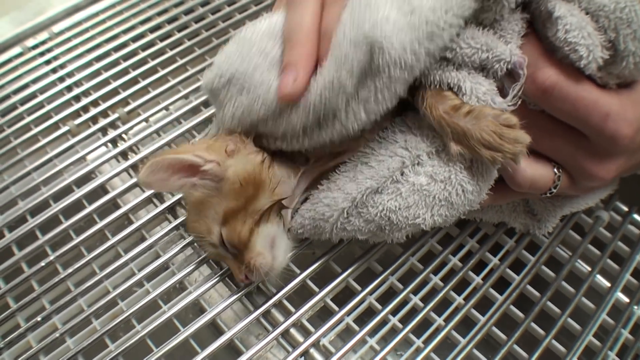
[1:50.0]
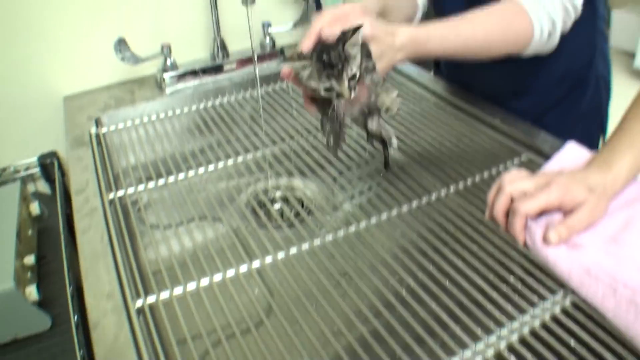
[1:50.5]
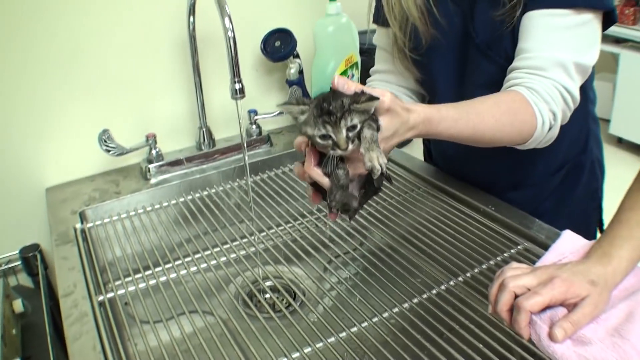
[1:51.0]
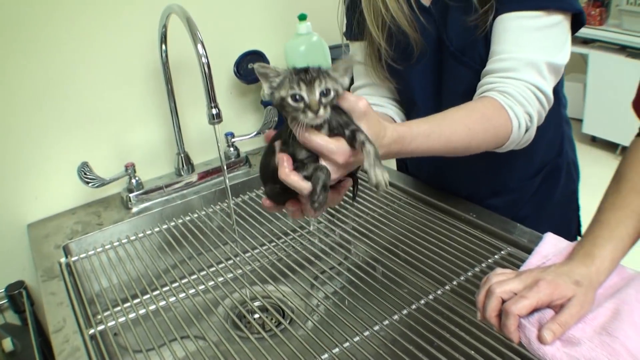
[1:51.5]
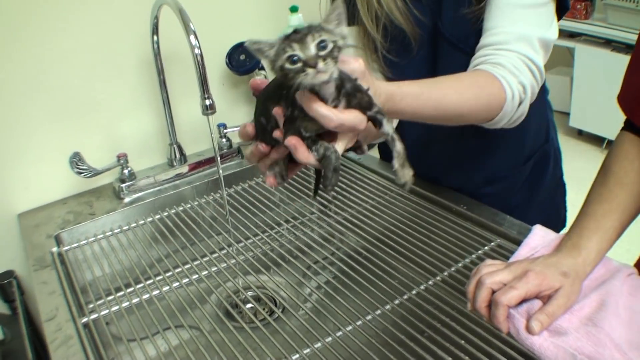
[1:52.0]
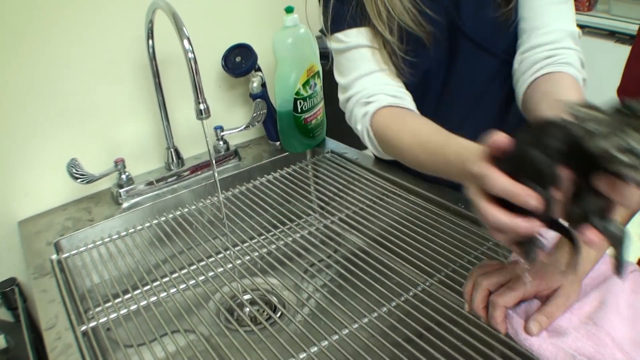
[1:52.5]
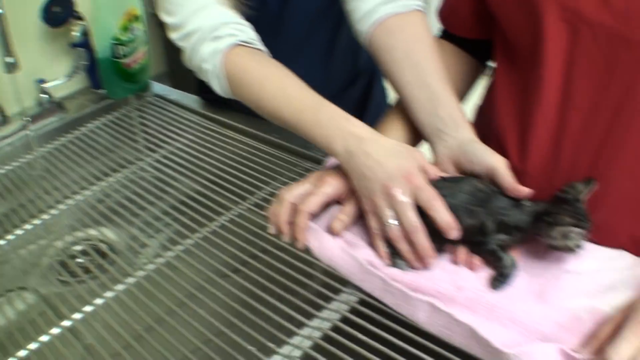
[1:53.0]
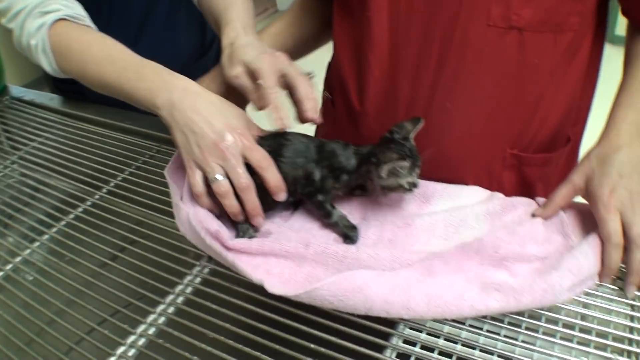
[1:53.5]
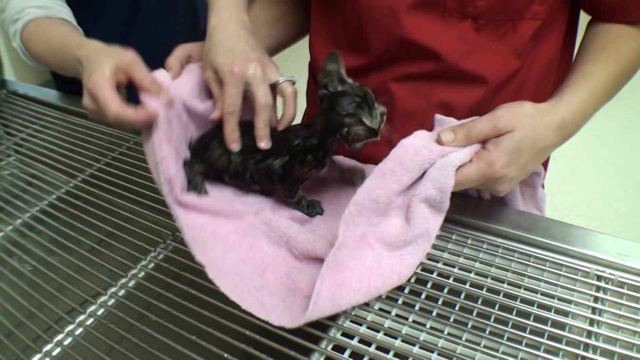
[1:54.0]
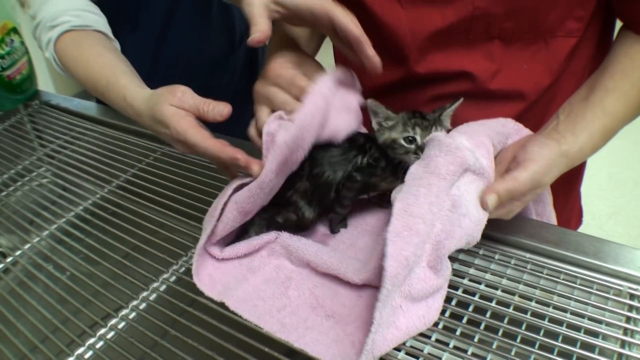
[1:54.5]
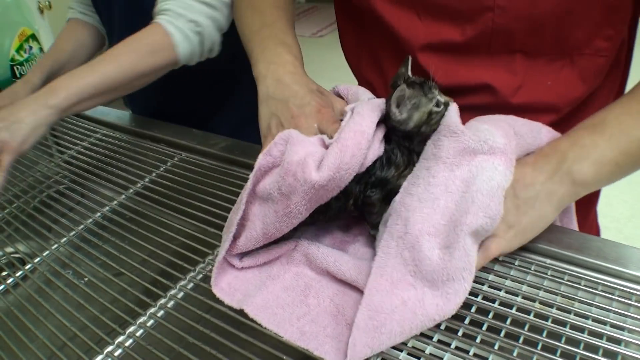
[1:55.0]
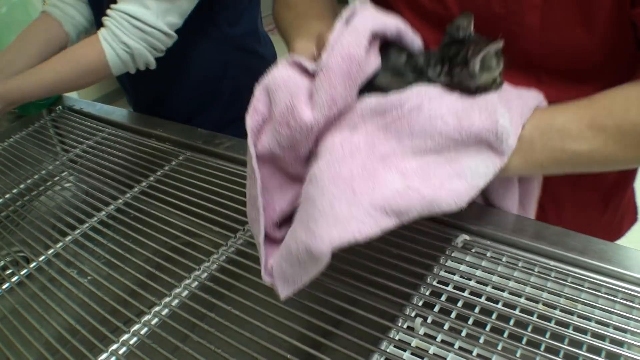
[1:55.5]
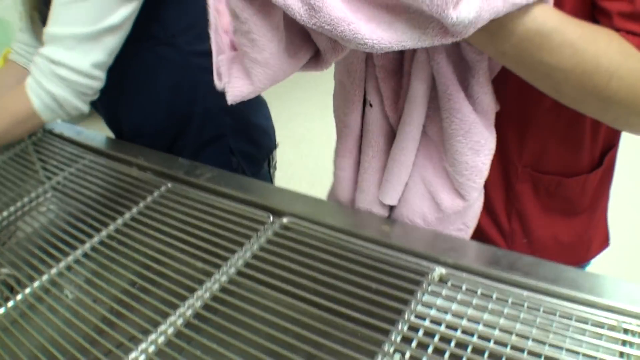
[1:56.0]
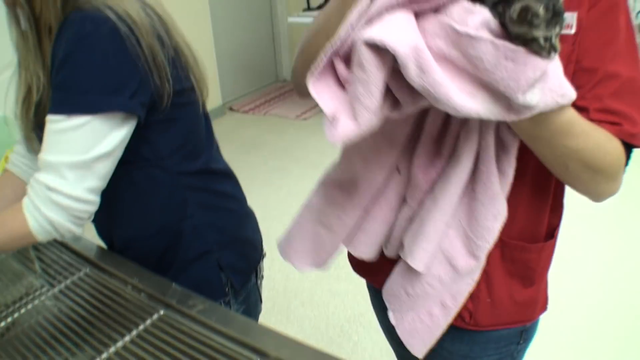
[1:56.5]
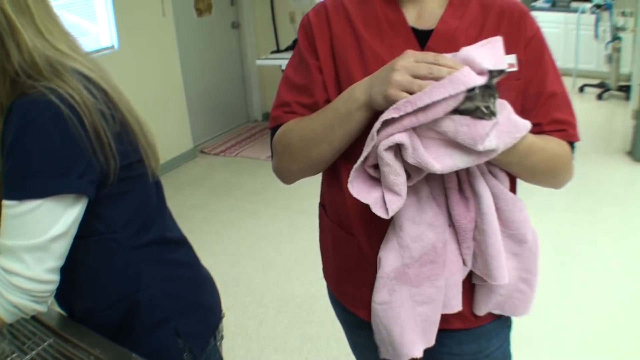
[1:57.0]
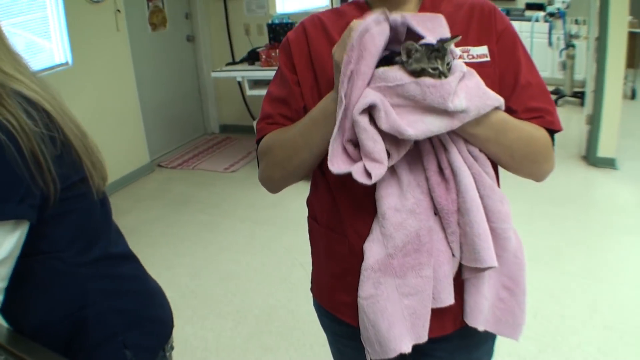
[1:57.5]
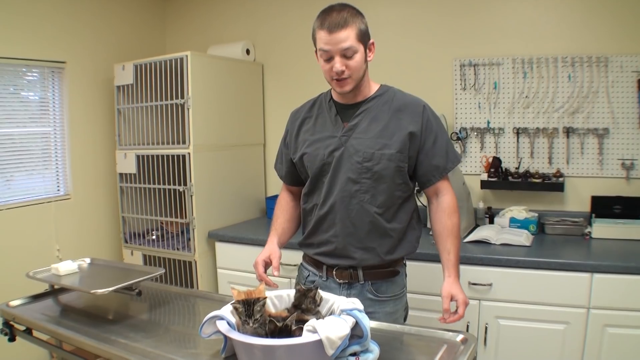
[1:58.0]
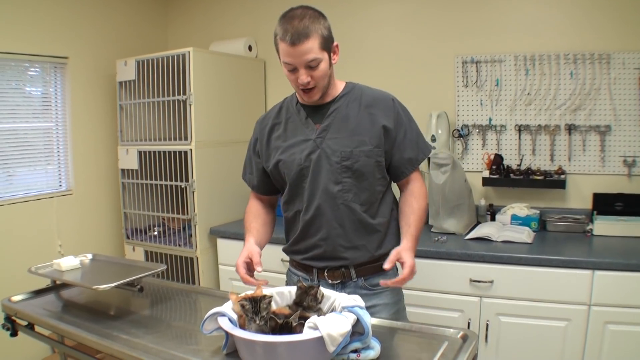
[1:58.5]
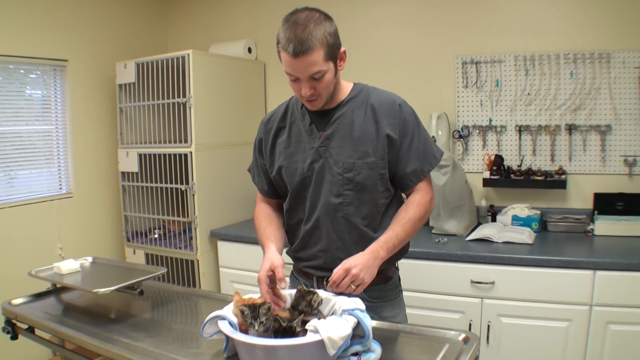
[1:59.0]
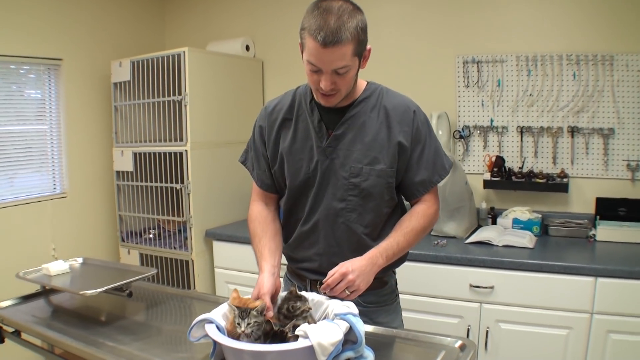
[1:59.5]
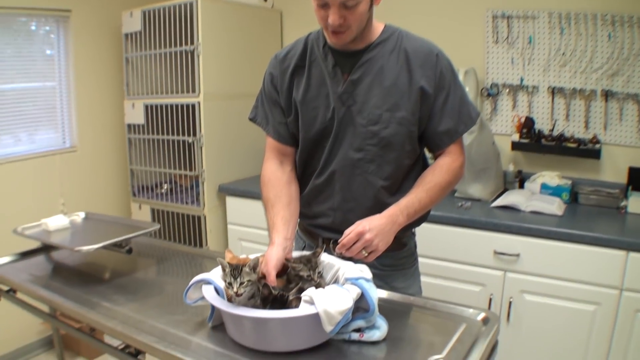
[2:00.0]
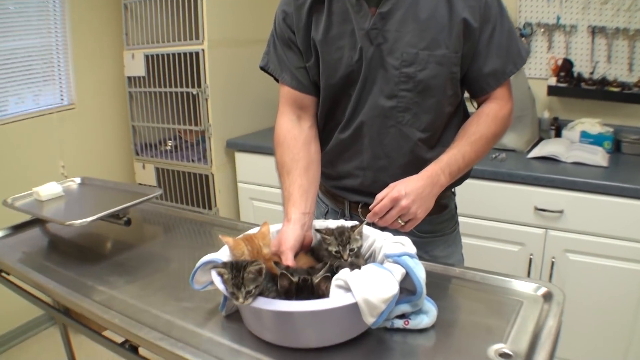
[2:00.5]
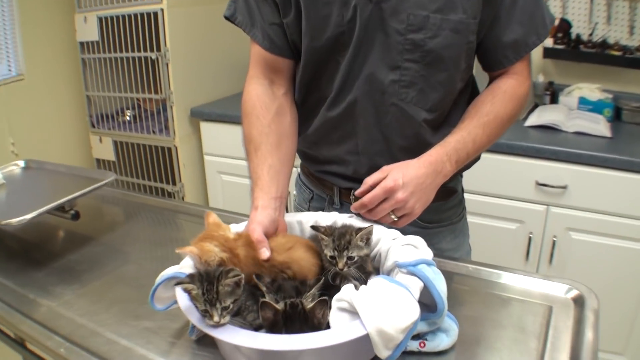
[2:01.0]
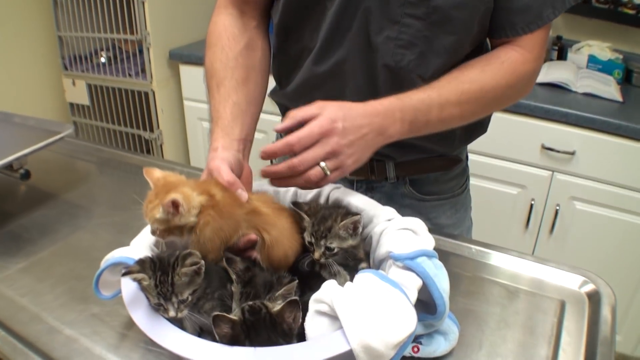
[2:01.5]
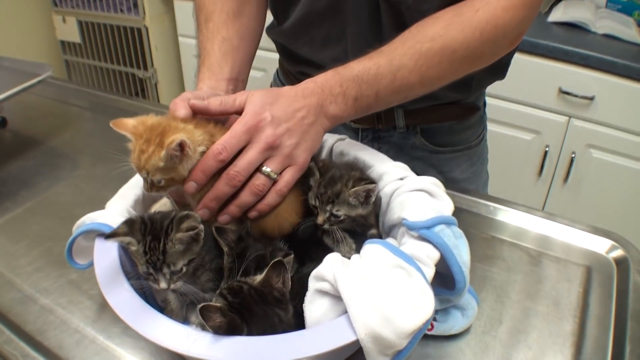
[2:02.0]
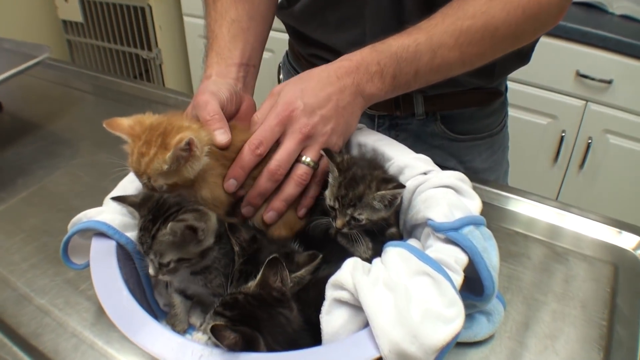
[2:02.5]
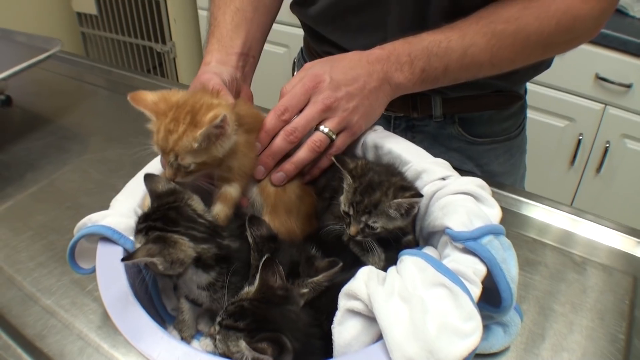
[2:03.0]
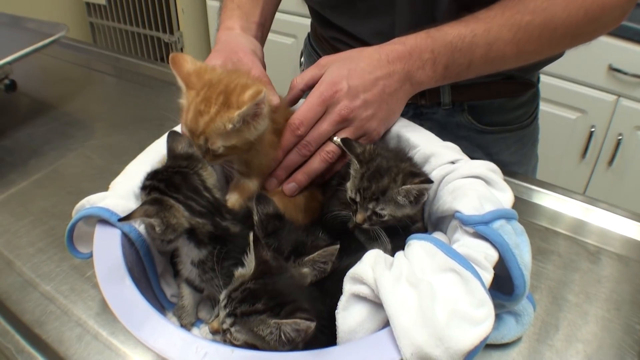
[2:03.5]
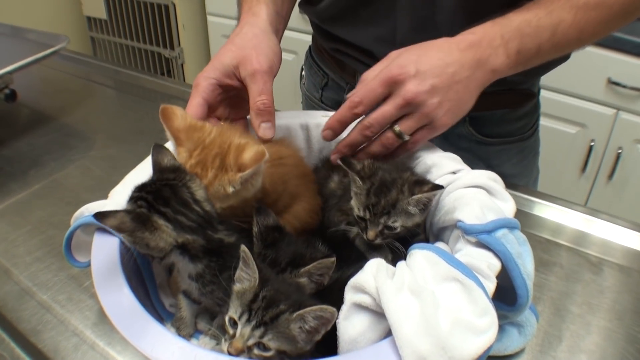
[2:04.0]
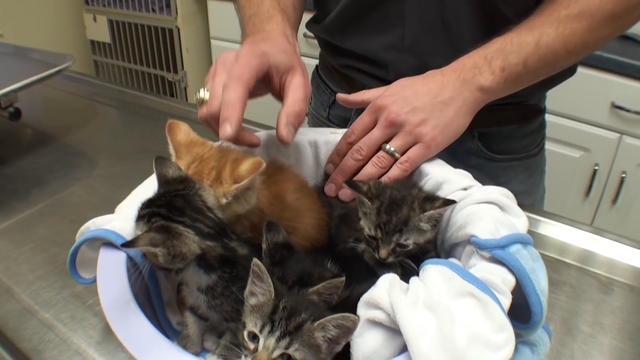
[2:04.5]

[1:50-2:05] The little ginger kitten and her sister are being washed. The ginger kitten is dried off with her face on the grating, and her sister is in a pink fluffy towel, being handled roughly in the towel as she is dried. The five kittens then sit in a little basin, all cleaned off and looking fluffy. They are all eating, and then some are being dried off. The guy who gave them the syringes of medicine pets the ginger kitten and then pets all of them.